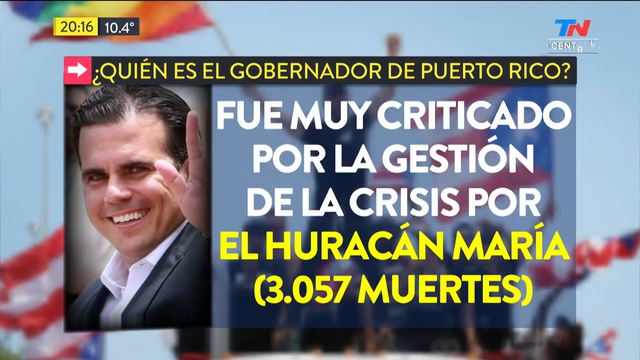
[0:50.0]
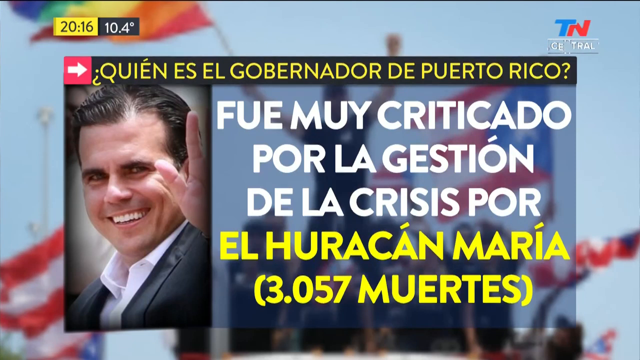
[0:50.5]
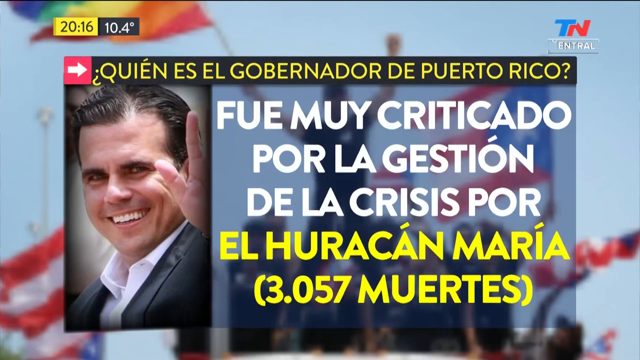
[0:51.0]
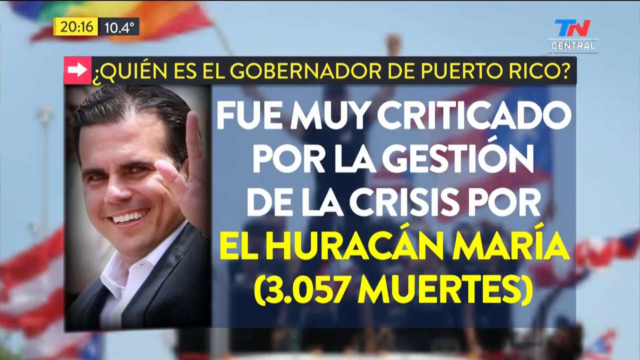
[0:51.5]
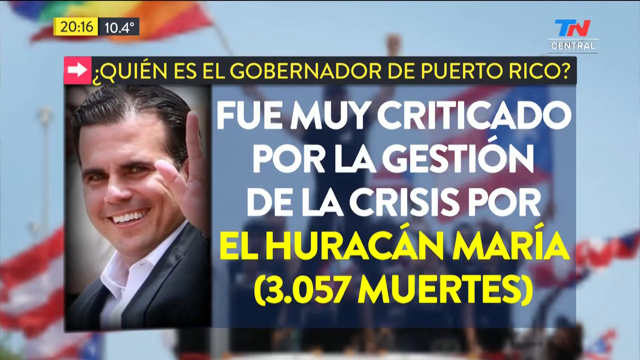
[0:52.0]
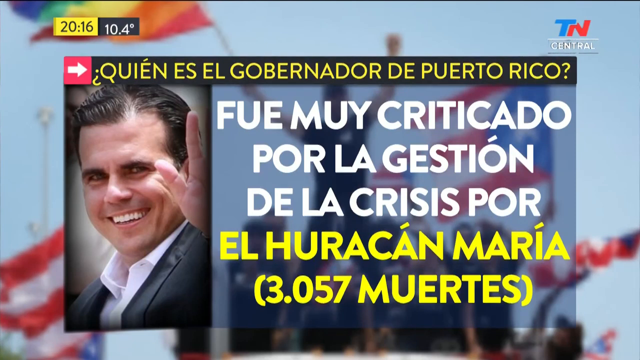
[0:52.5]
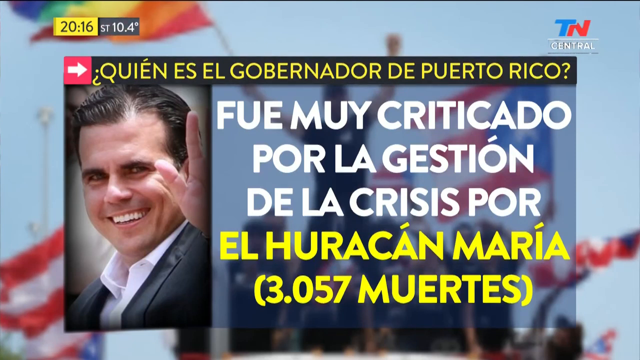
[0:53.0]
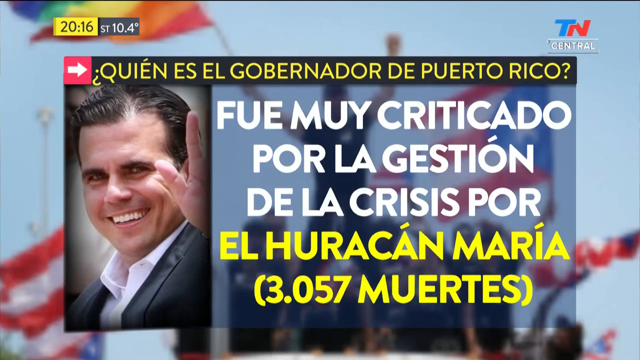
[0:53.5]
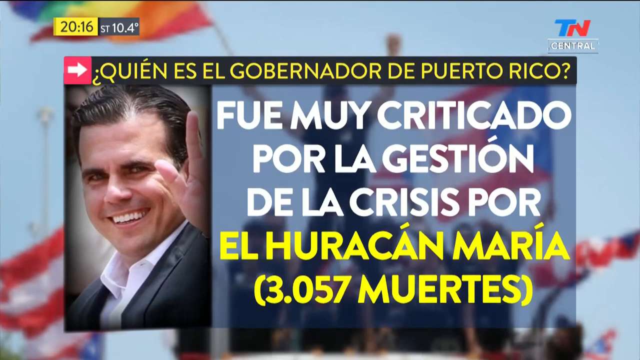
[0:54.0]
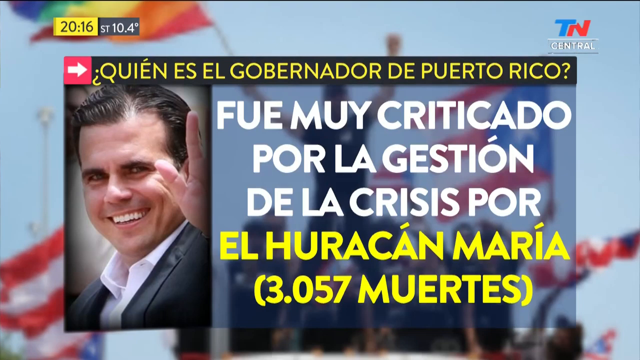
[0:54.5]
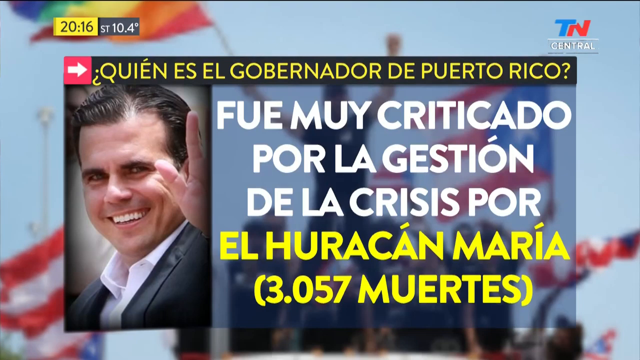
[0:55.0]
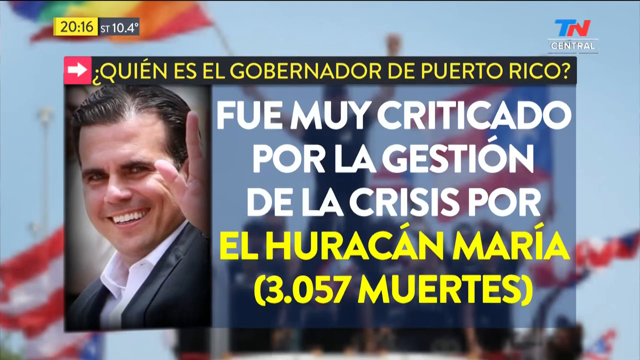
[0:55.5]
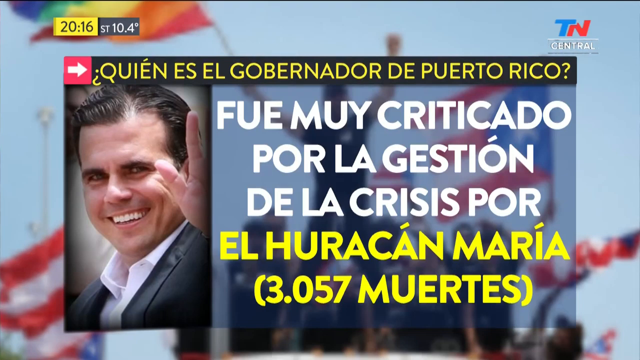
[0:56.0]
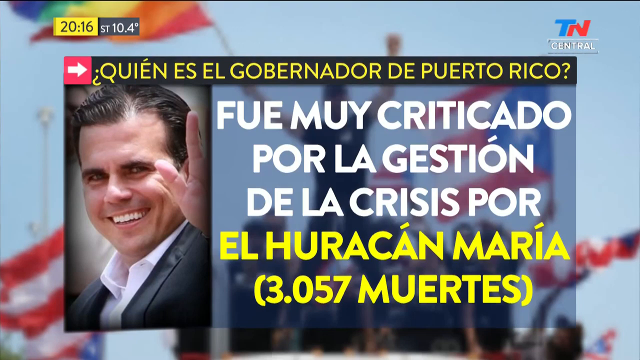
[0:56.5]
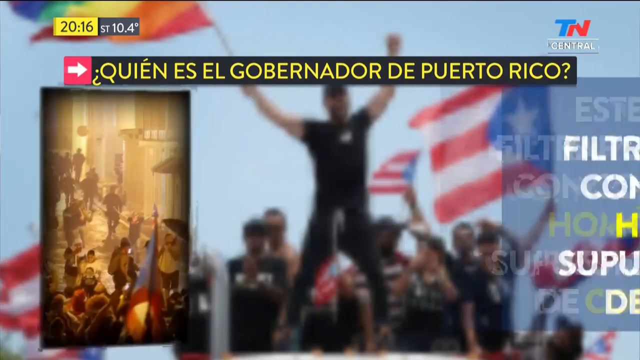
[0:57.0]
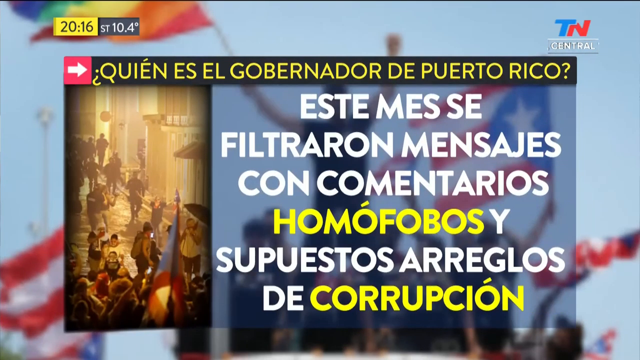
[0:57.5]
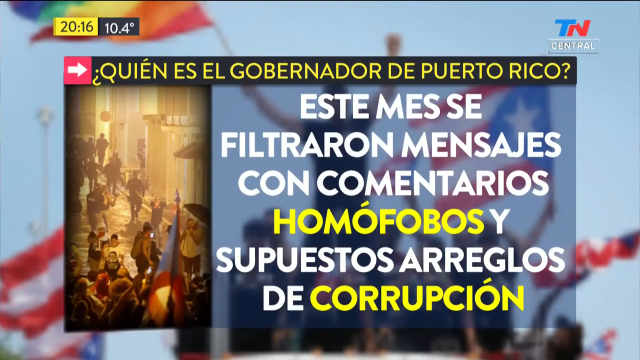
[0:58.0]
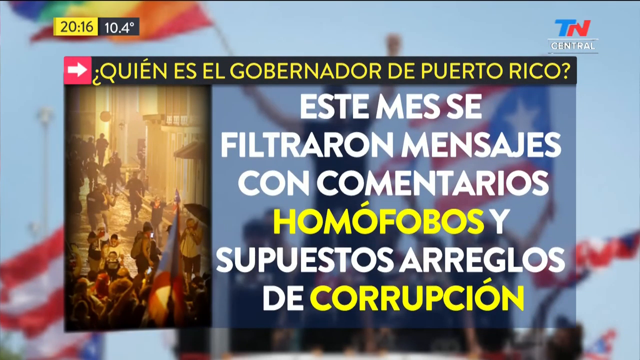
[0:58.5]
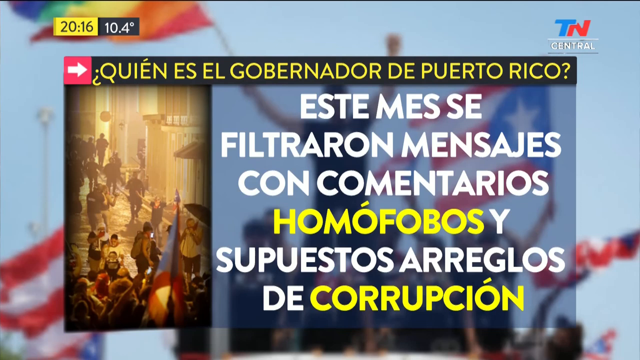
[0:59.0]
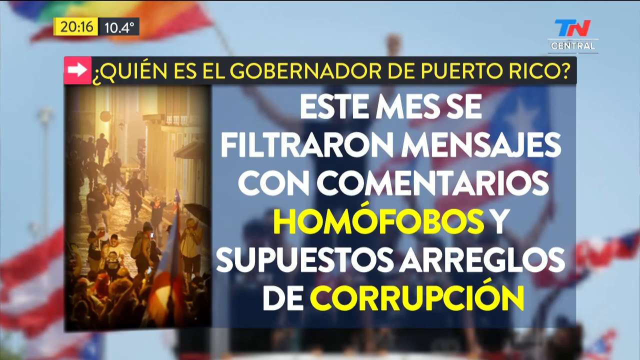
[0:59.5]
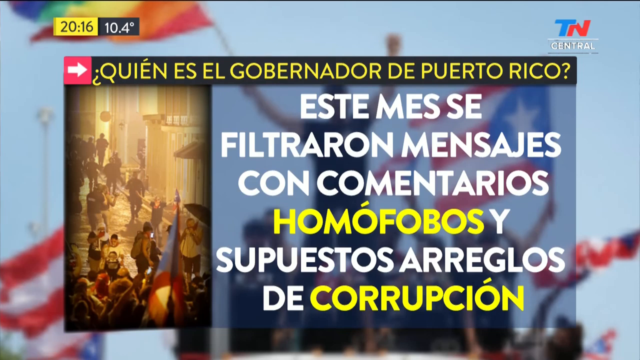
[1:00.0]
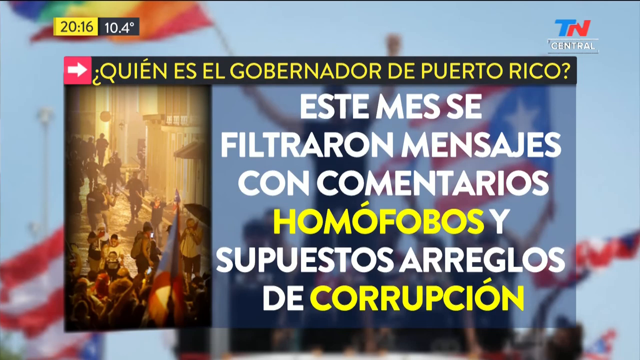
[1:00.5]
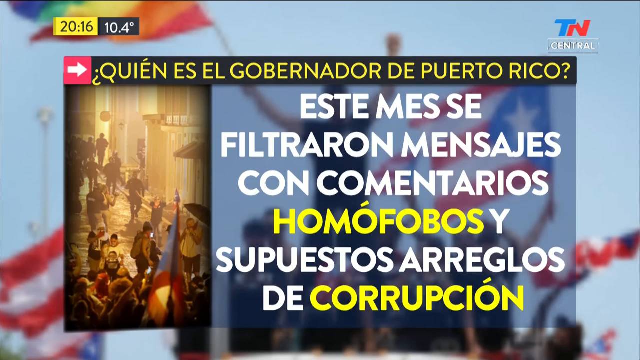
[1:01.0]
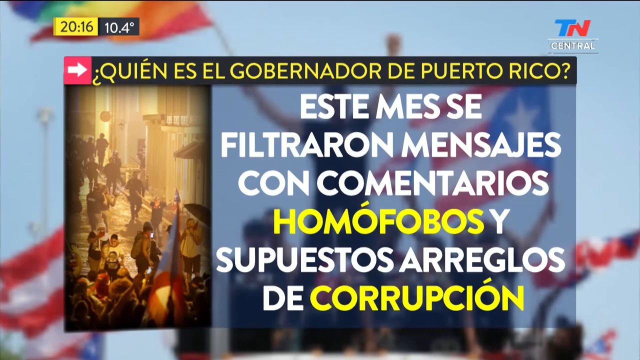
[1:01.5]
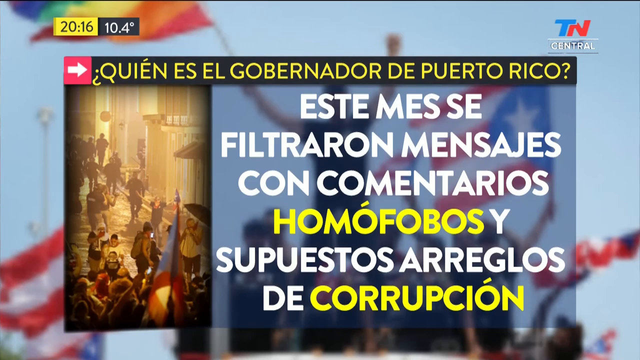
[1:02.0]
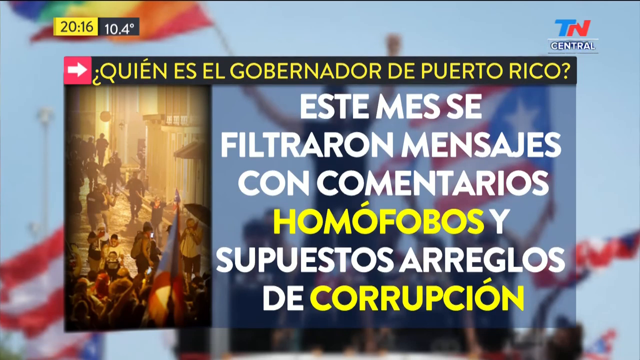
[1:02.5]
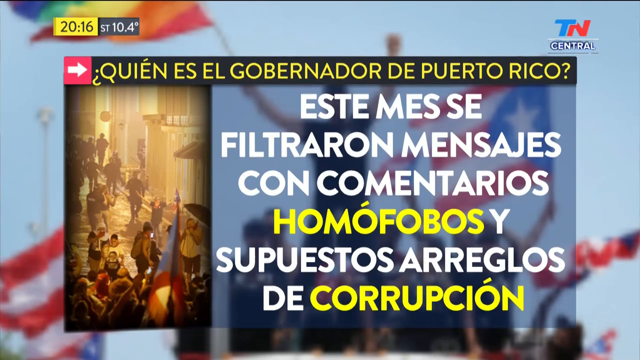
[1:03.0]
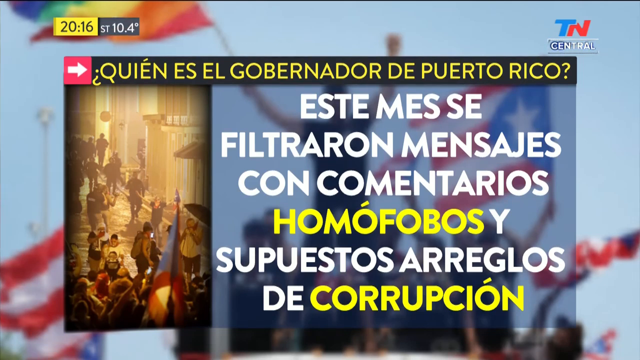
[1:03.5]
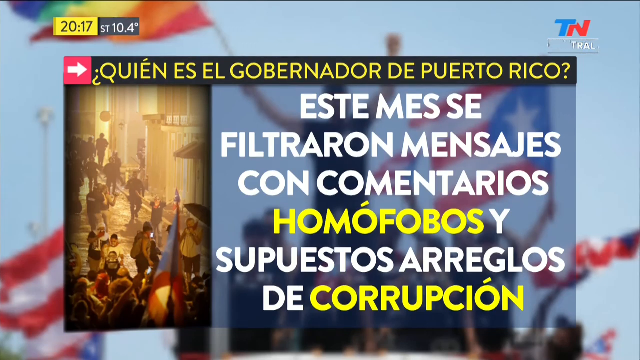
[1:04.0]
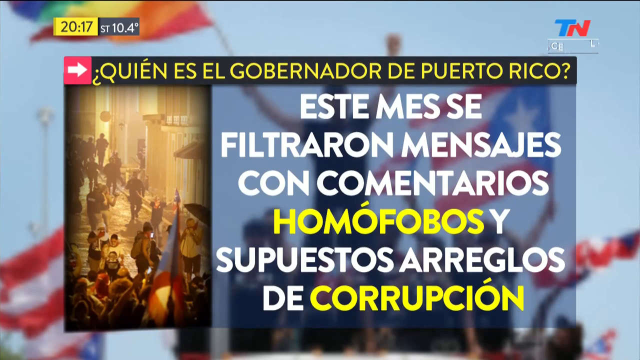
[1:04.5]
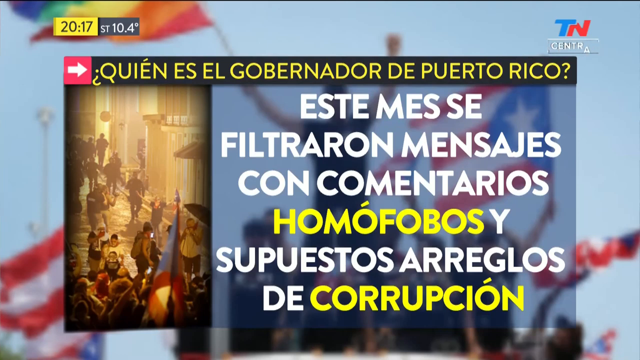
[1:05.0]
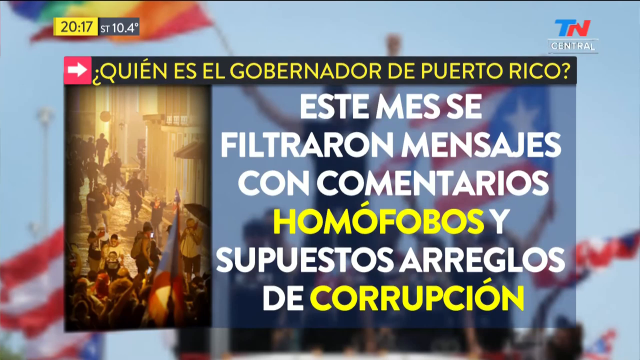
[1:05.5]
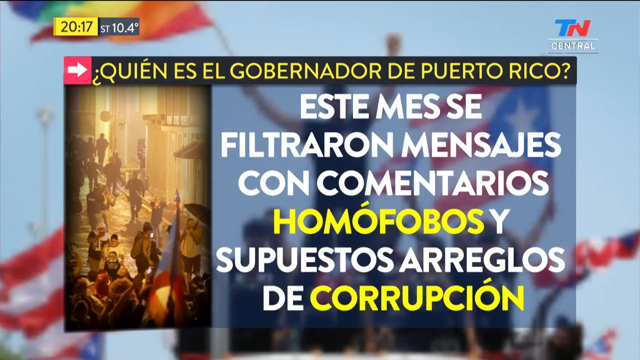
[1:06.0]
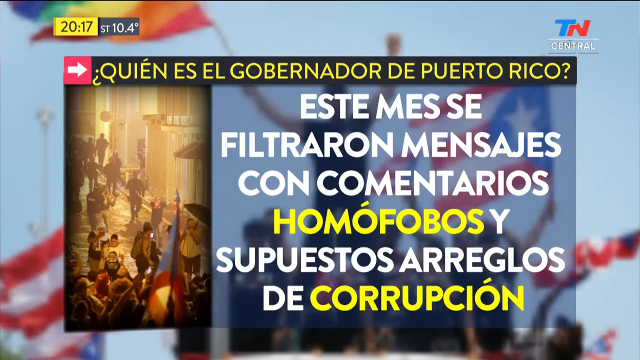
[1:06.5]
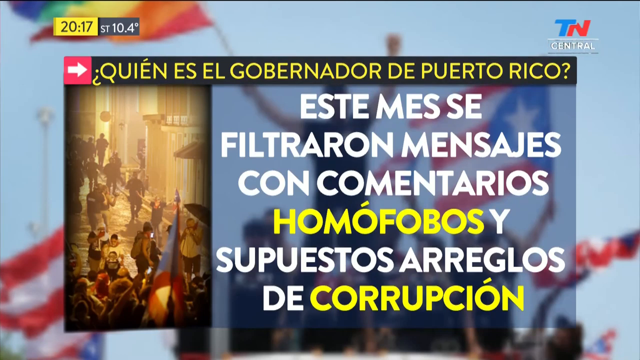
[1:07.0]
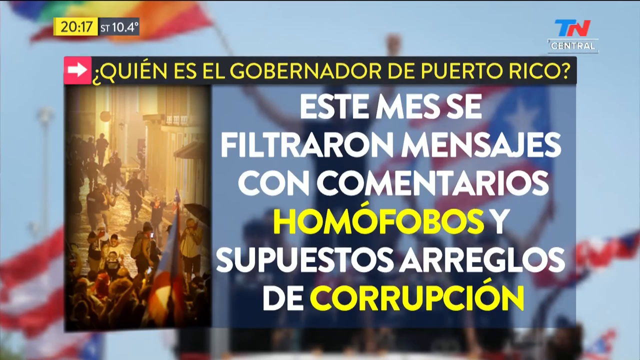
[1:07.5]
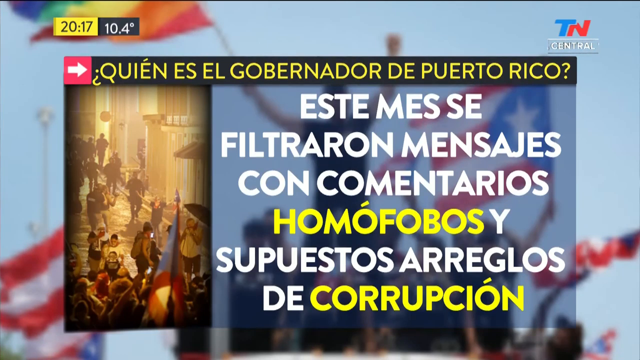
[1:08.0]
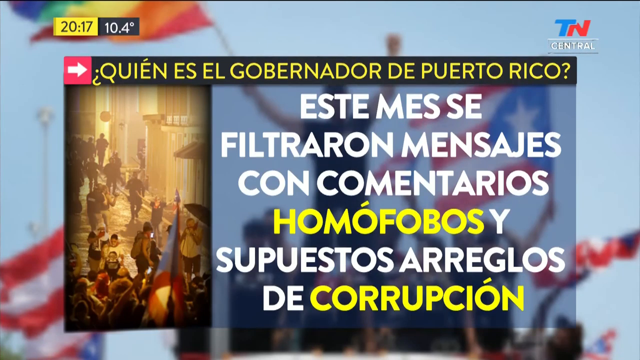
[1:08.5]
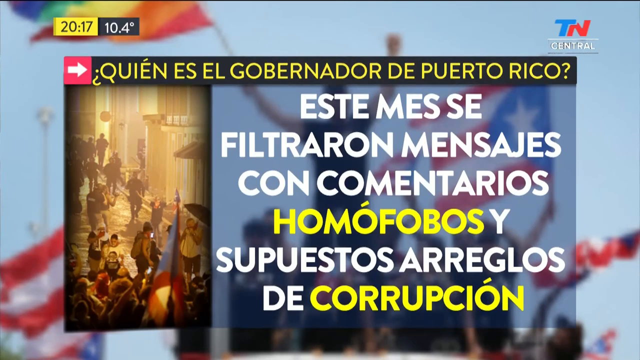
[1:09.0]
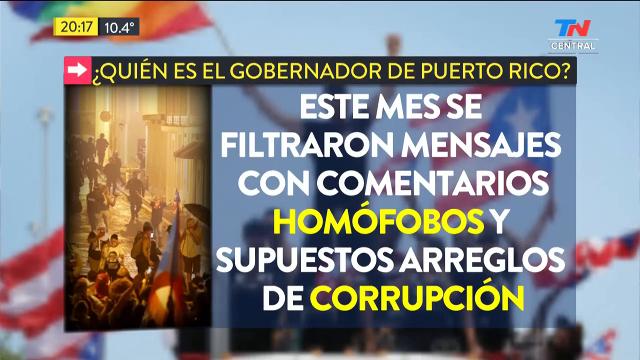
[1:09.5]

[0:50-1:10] After the picture of the political figure, footage from Puerto Rico shows forces, and people across the street. The news channel appears to be FTN. People are moving with forces behind them, yet they continue with their activity; it might be a protest or a campaign.